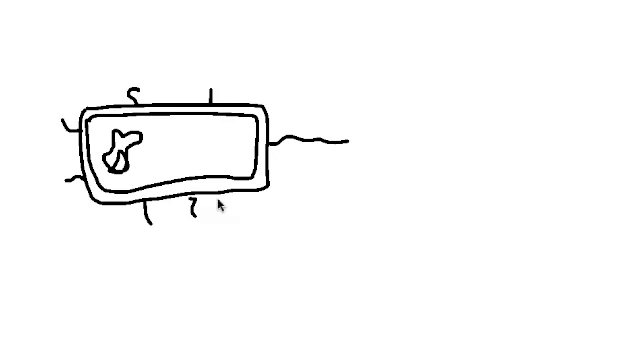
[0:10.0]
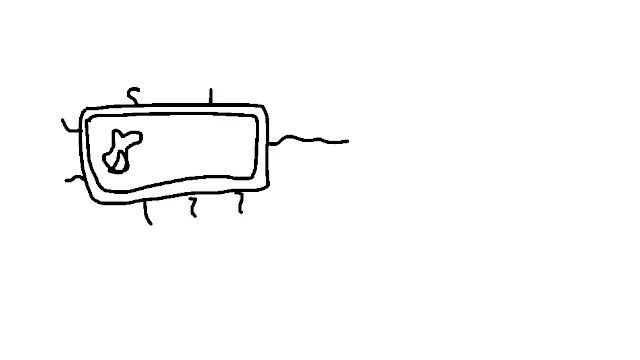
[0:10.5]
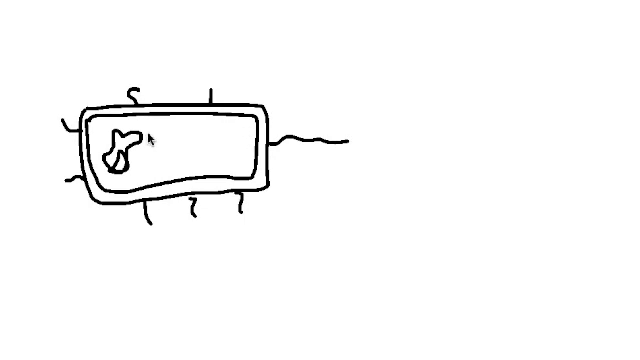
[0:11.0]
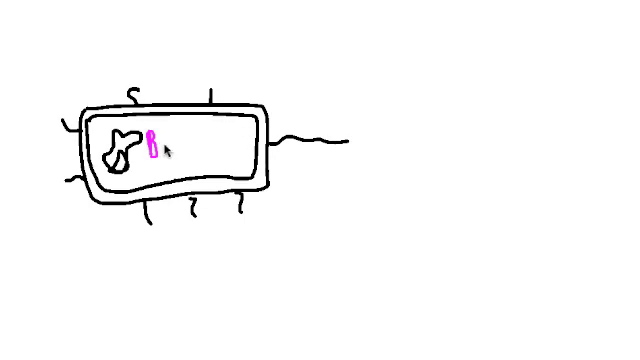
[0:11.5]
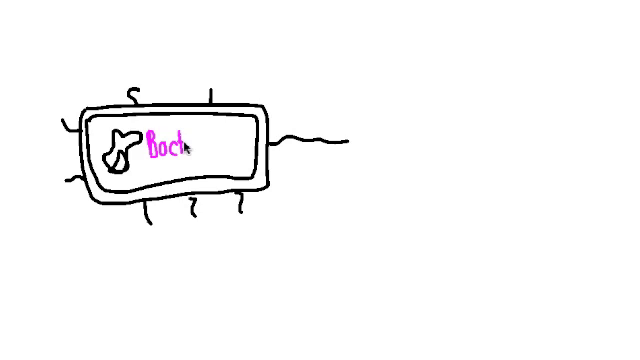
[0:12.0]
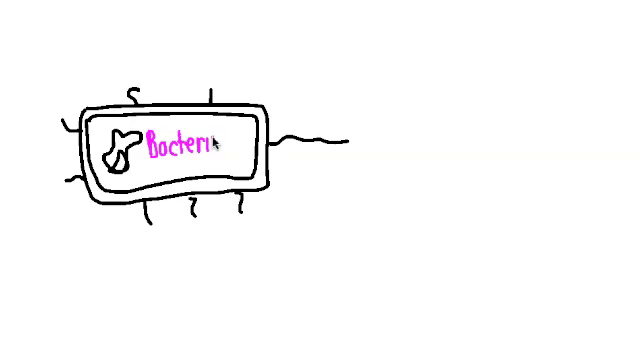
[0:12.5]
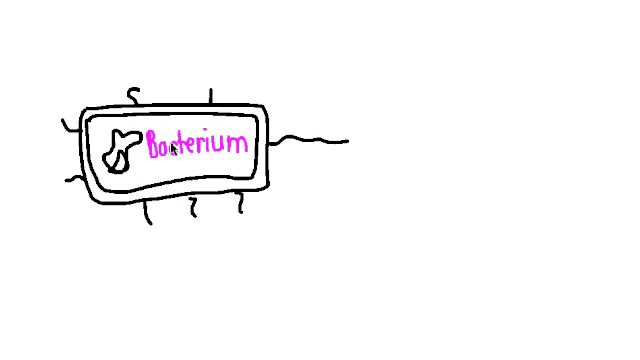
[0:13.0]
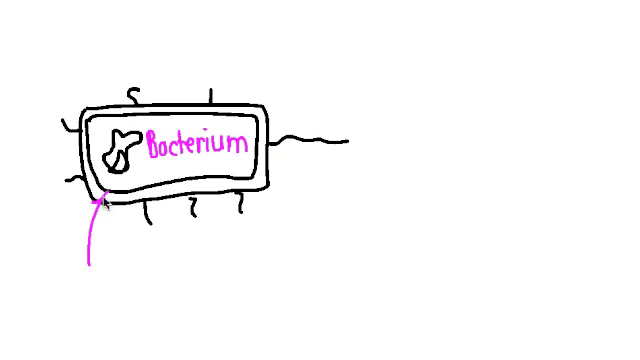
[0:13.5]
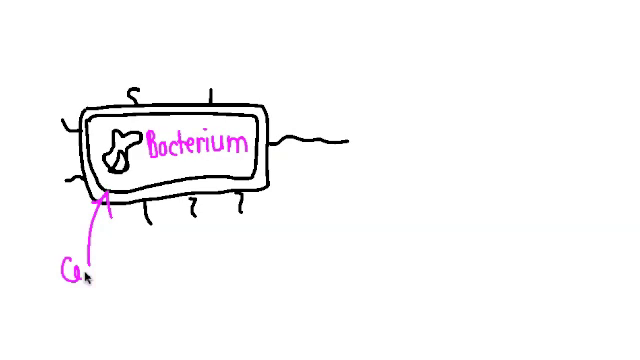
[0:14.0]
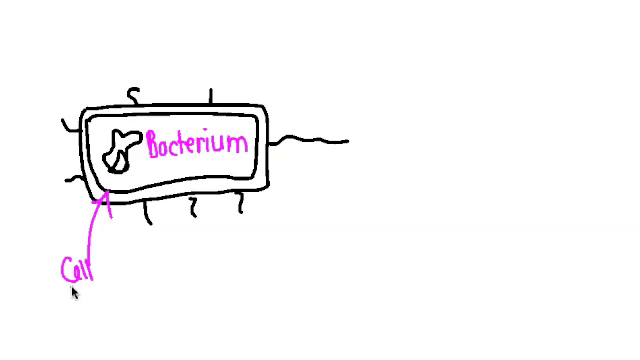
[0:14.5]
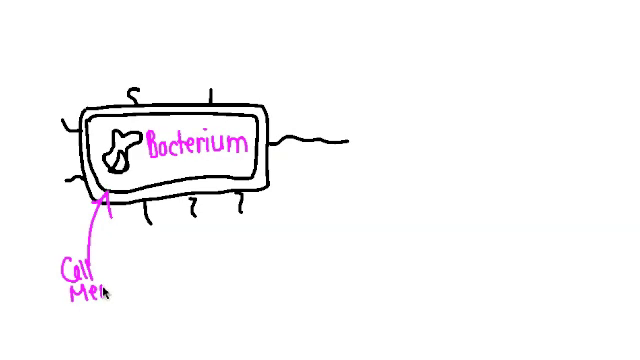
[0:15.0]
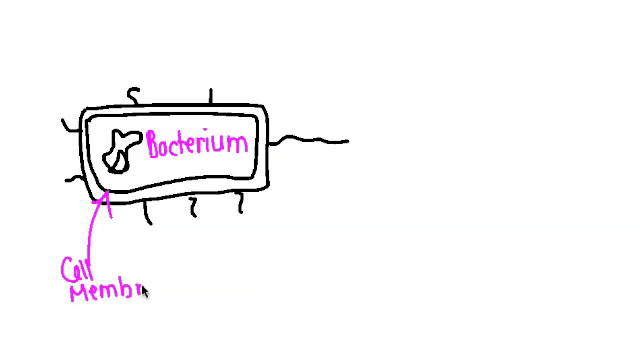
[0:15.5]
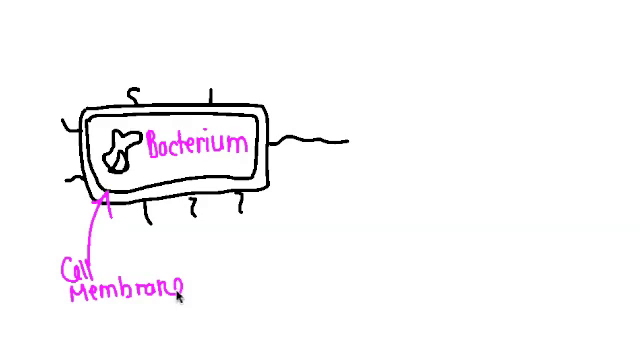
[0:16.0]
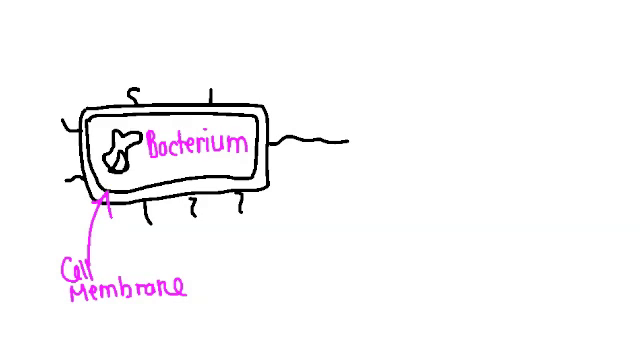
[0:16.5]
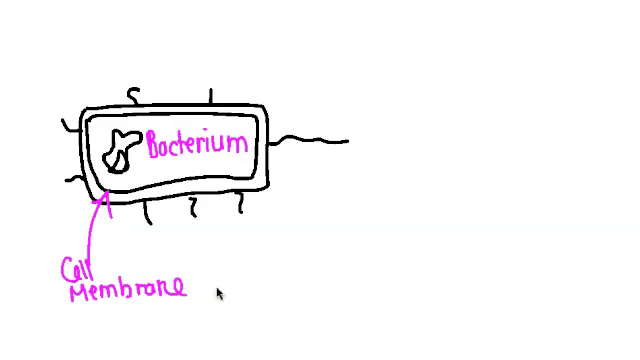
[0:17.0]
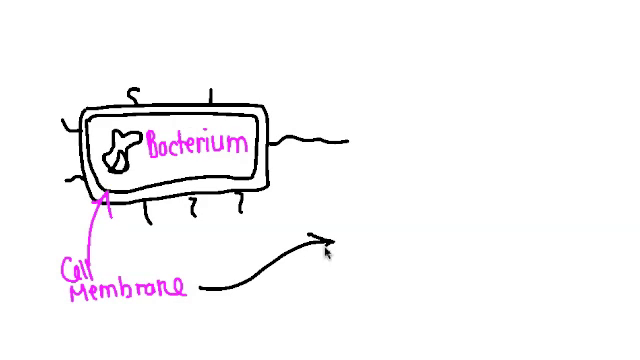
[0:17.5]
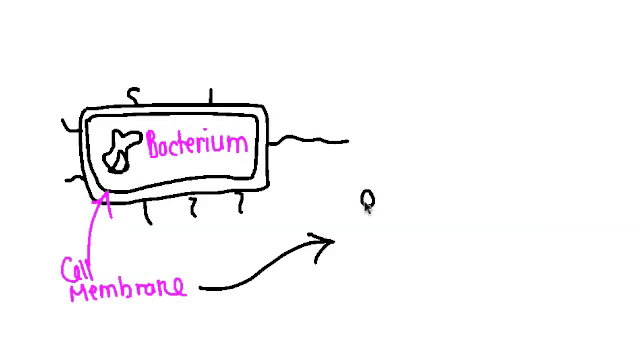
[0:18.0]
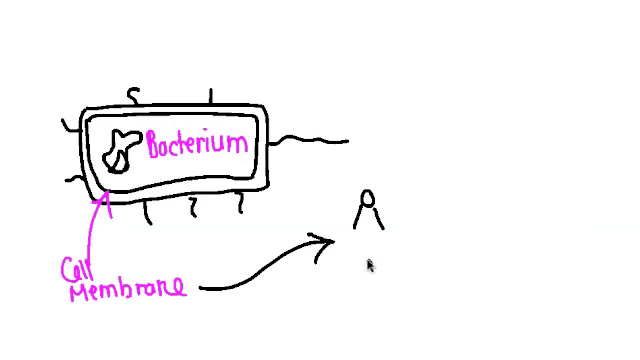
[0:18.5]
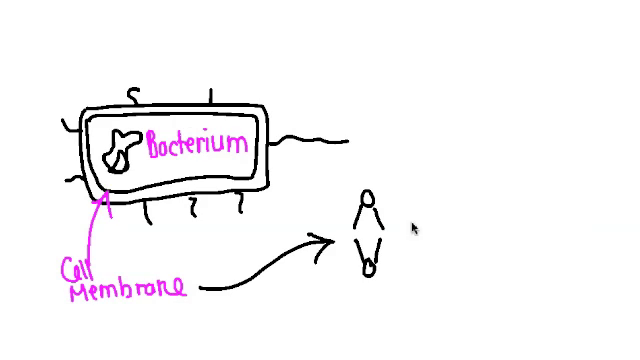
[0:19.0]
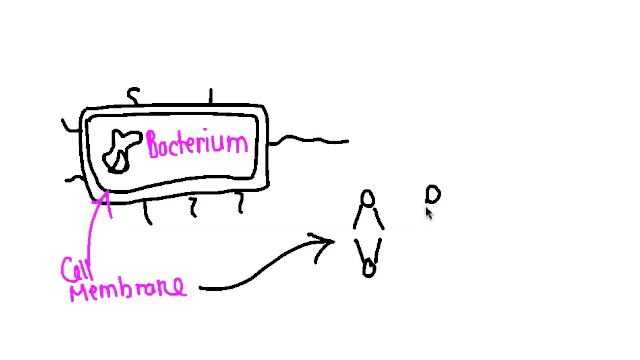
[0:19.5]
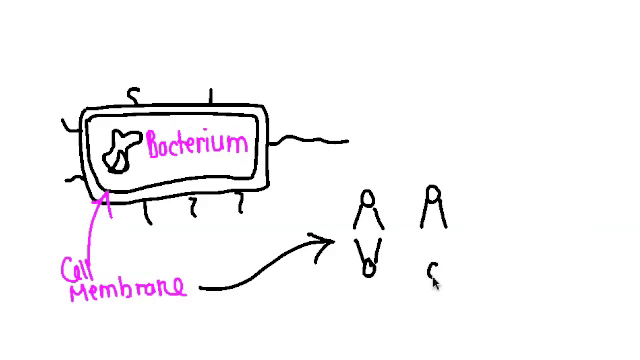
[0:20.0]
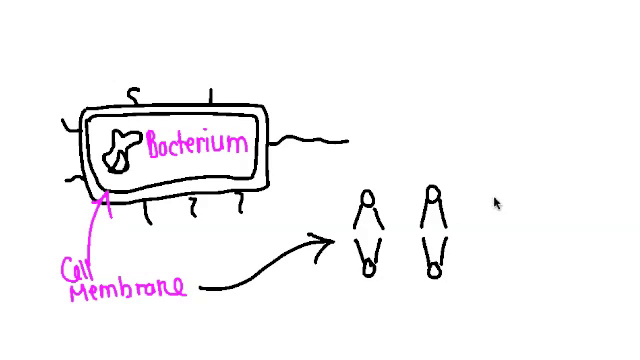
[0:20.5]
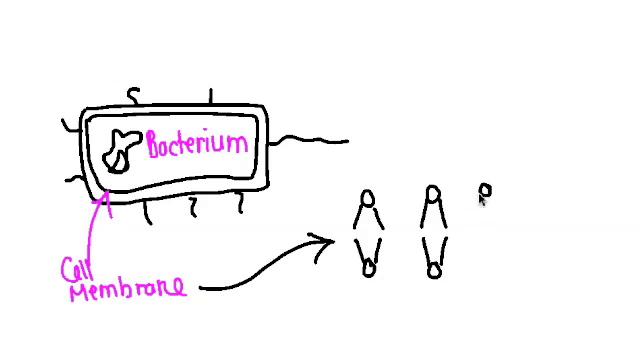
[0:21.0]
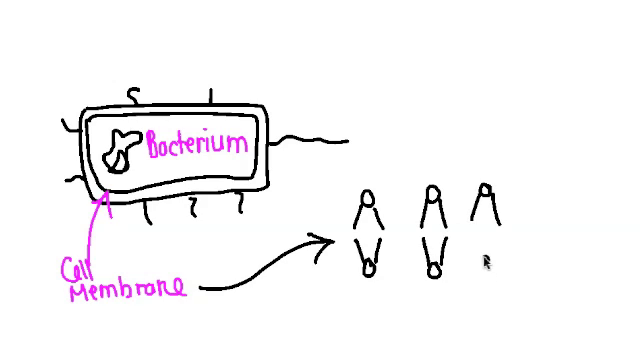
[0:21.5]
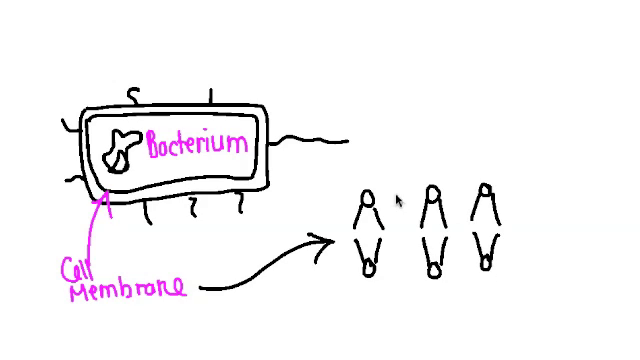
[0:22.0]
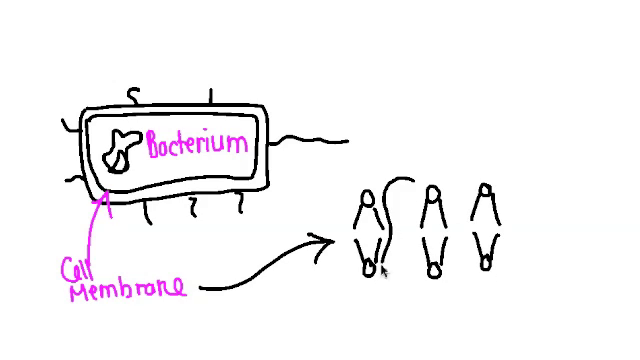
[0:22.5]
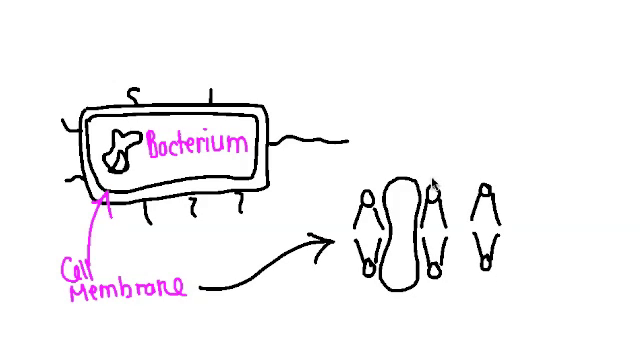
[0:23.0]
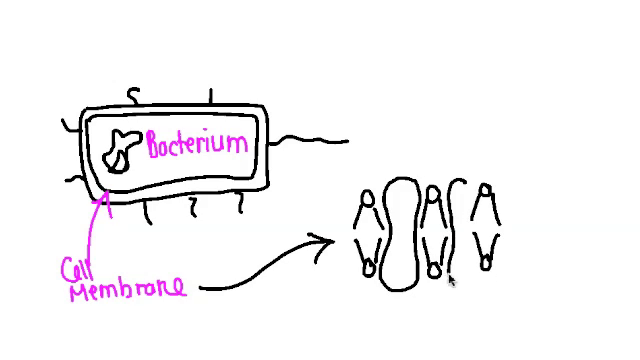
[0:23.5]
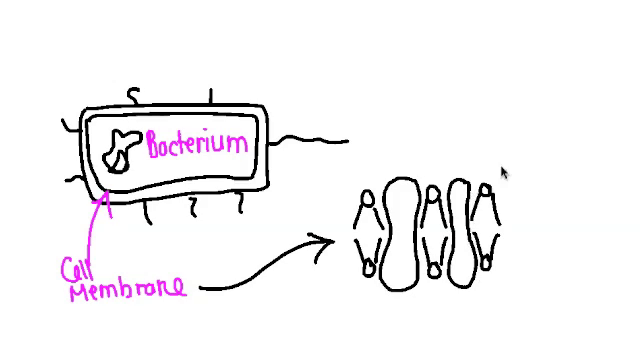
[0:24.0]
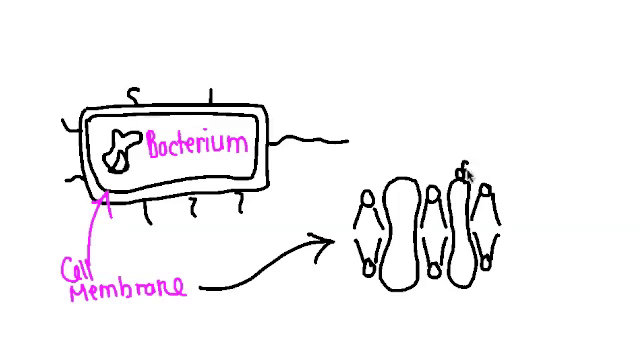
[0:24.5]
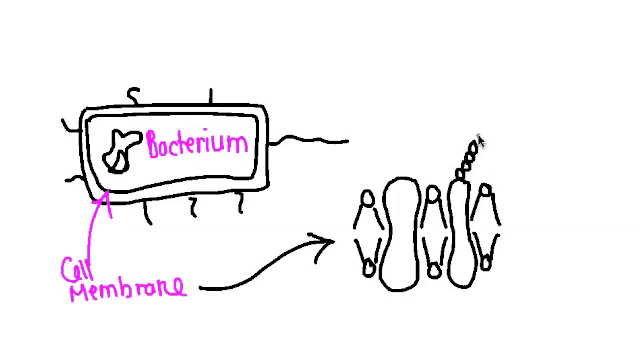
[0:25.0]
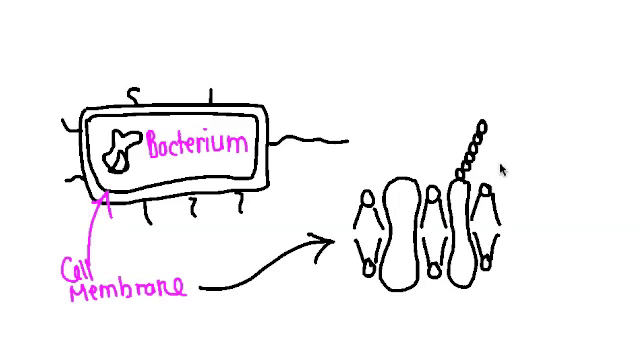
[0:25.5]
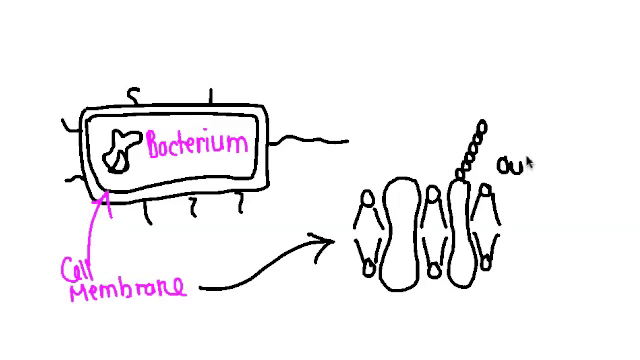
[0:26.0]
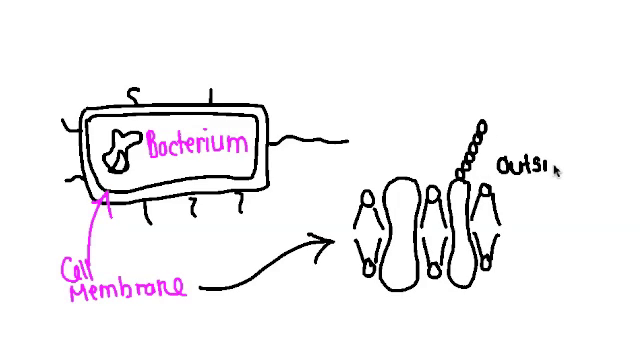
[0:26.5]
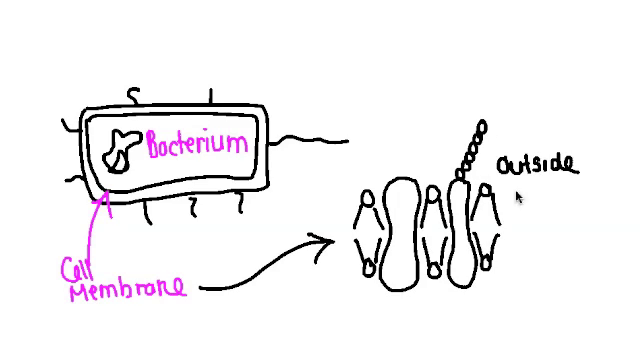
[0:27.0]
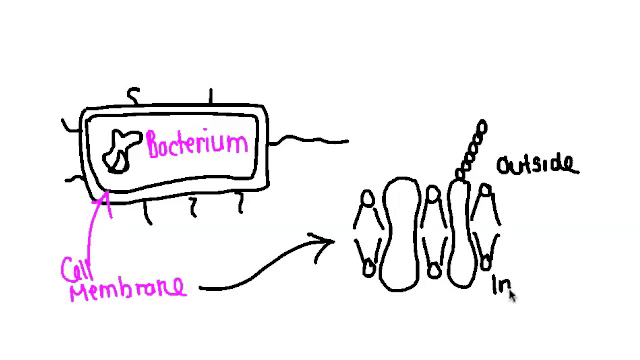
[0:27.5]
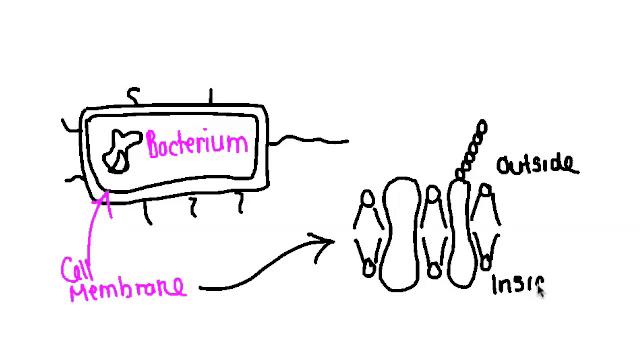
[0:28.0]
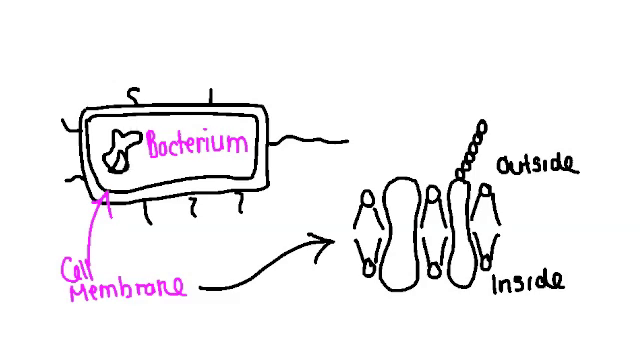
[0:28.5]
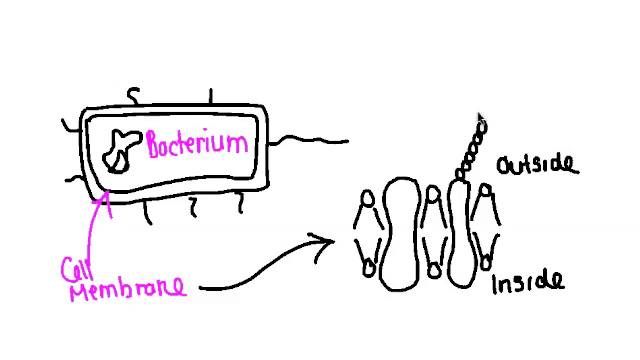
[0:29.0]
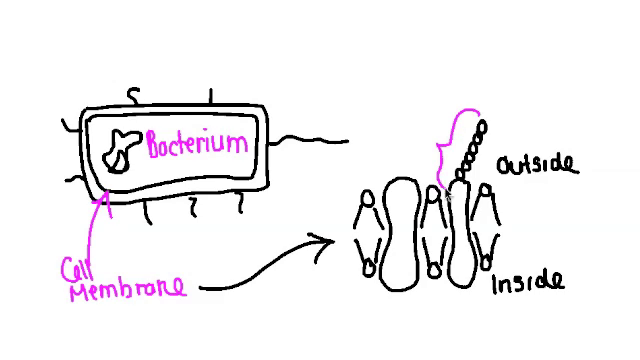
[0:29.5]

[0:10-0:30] The same drawing remains, and "bacterium" is now written in pink. Below the rectangle, "cell membrane" is written, with an arrow pointing up to the rectangle. The rectangle has three lines on the bottom, one on the right, two on top and two on the left. An arrow is drawn from "cell membrane" over to the right, and the drawing arrow then draws designs showing the outside and inside of the cell membrane. There appear to be three different drawings shaped almost like V's, with a circle where the two lines of each V connect; there are three on the bottom and three on top, almost connected at their wide parts. They are vertical, and a squiggle is drawn in between each of them.